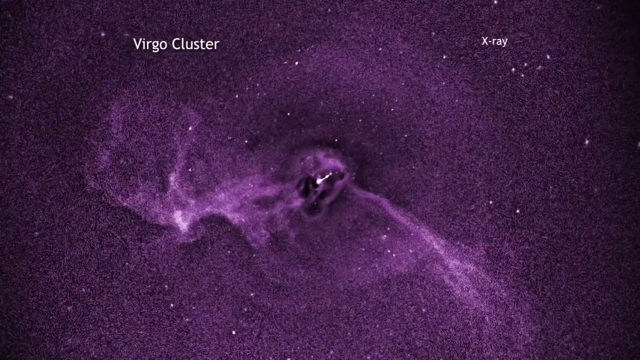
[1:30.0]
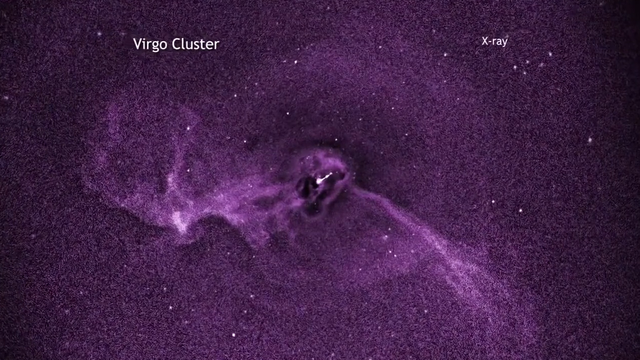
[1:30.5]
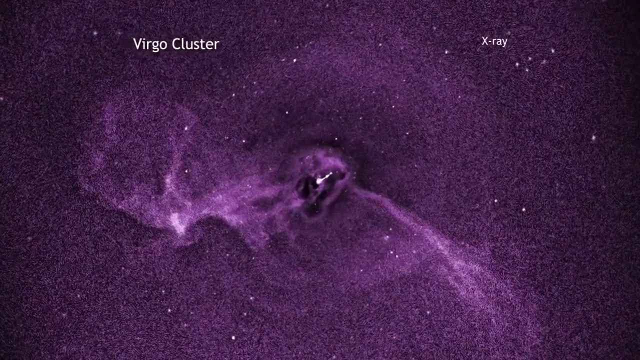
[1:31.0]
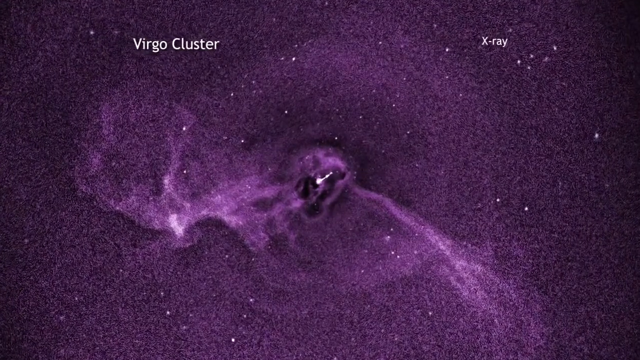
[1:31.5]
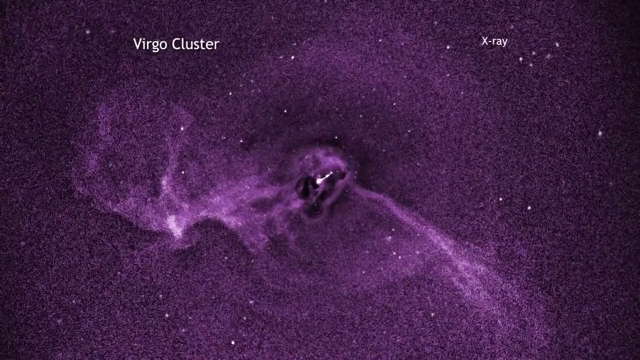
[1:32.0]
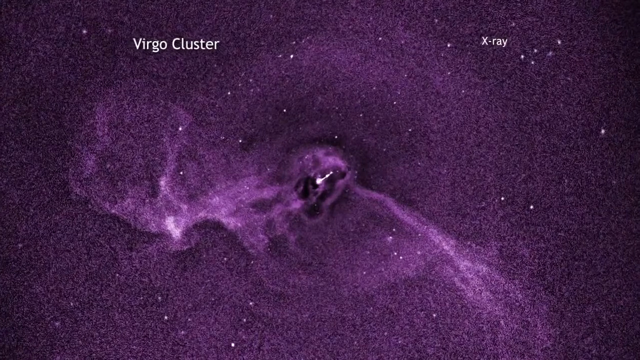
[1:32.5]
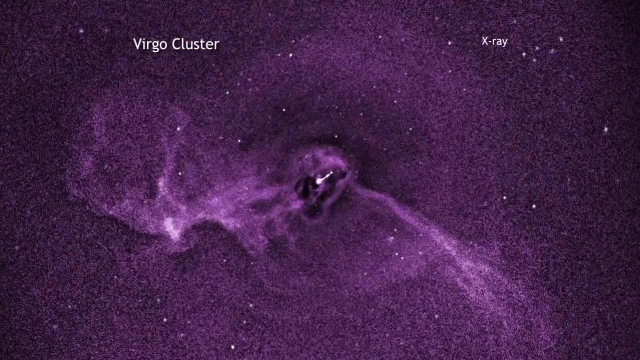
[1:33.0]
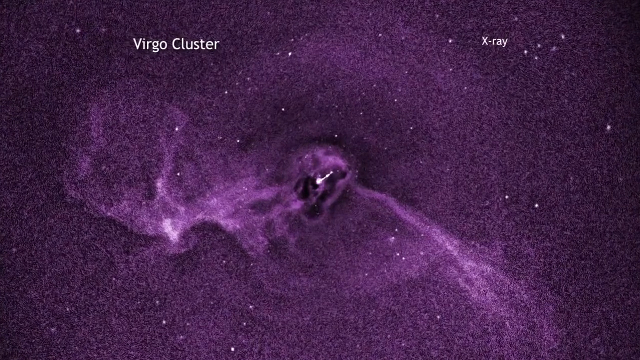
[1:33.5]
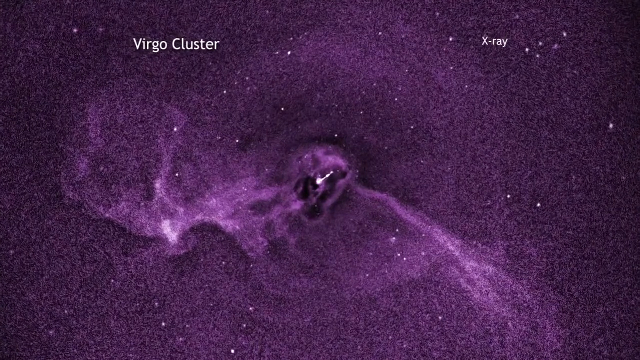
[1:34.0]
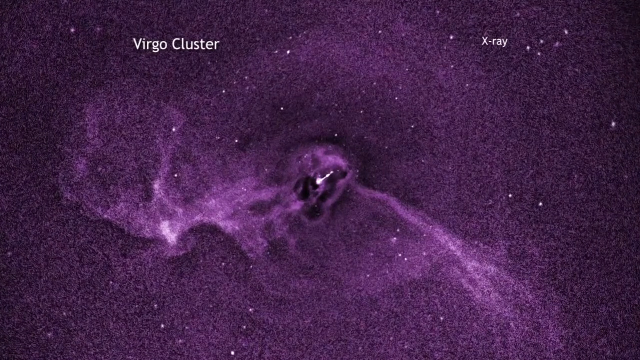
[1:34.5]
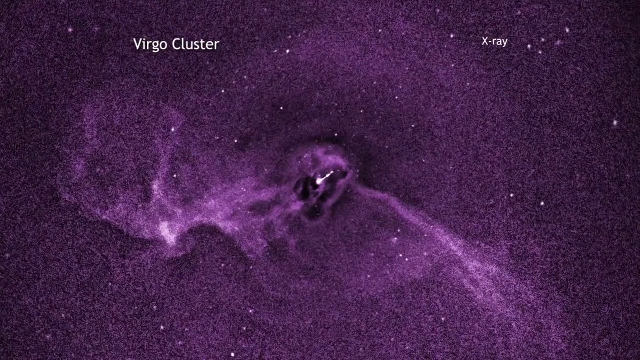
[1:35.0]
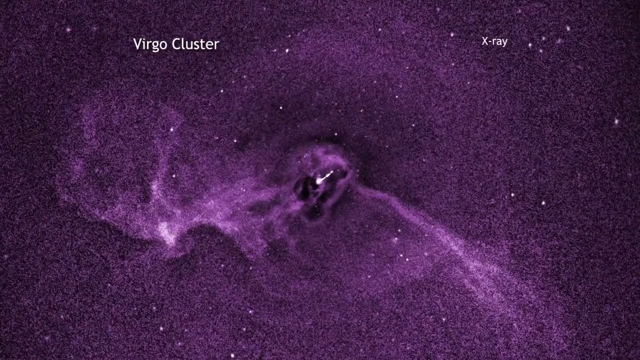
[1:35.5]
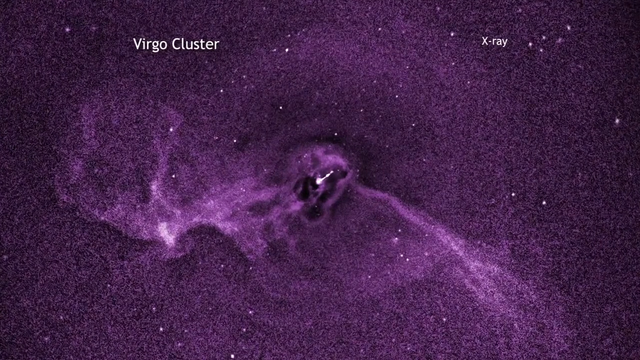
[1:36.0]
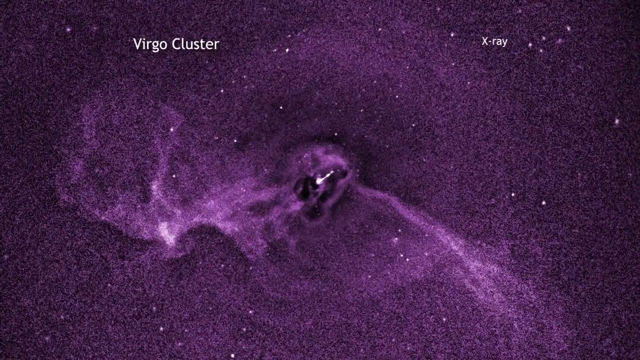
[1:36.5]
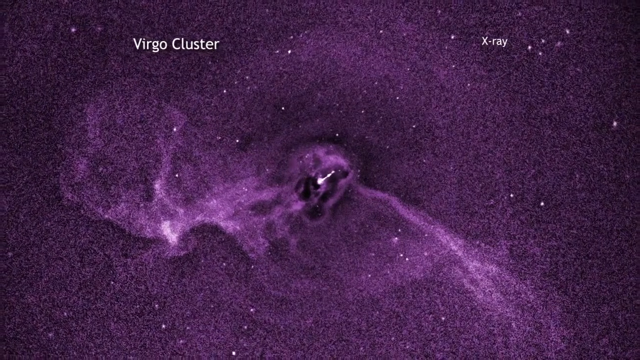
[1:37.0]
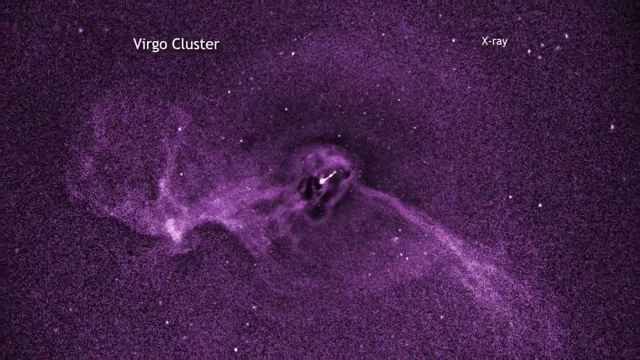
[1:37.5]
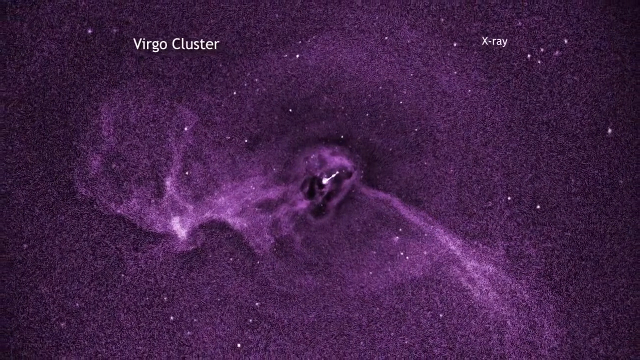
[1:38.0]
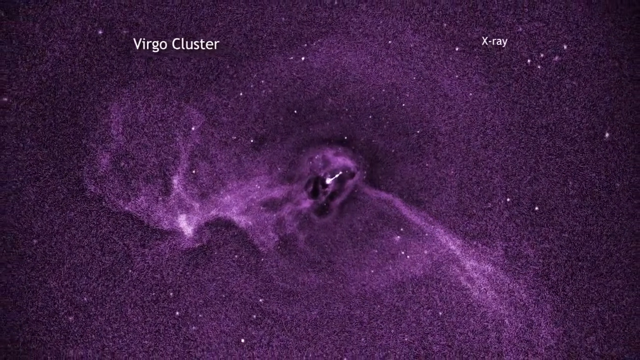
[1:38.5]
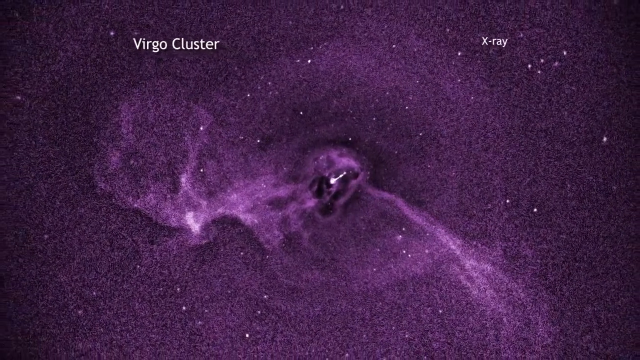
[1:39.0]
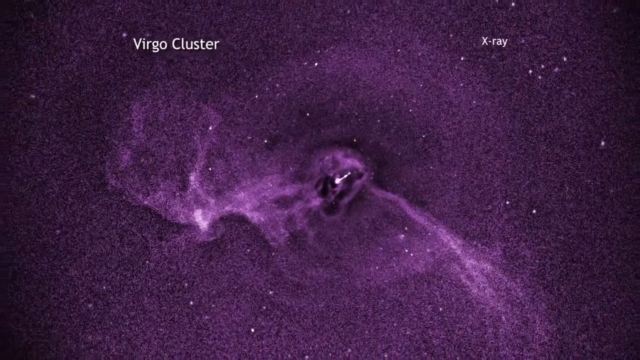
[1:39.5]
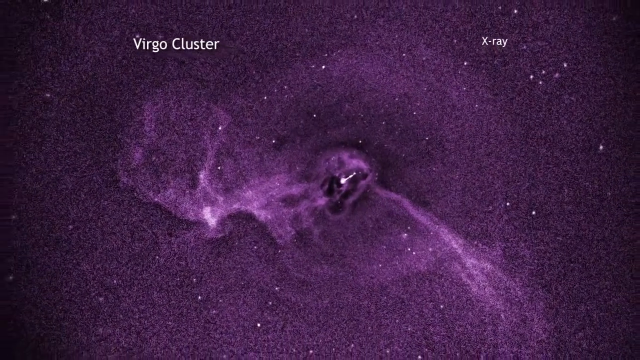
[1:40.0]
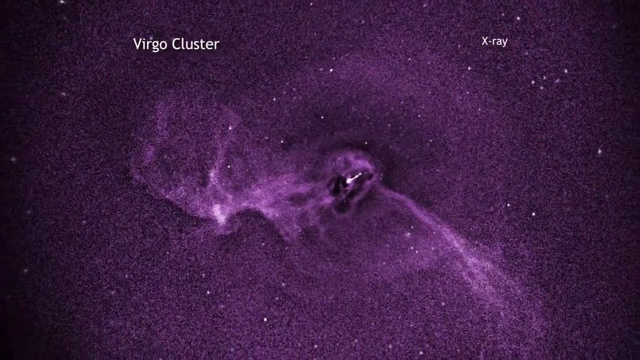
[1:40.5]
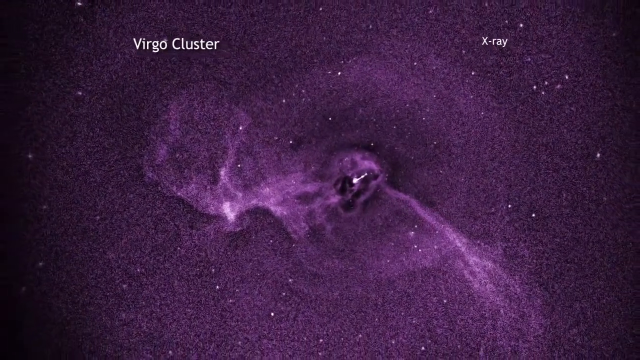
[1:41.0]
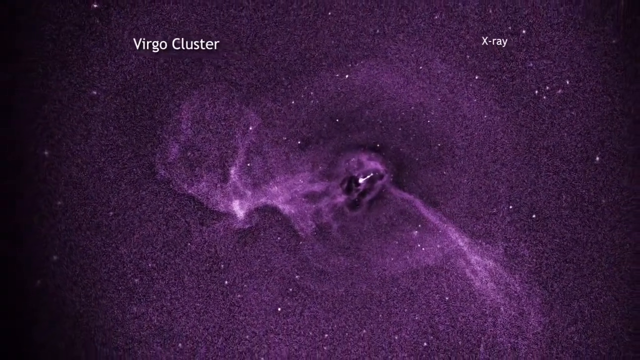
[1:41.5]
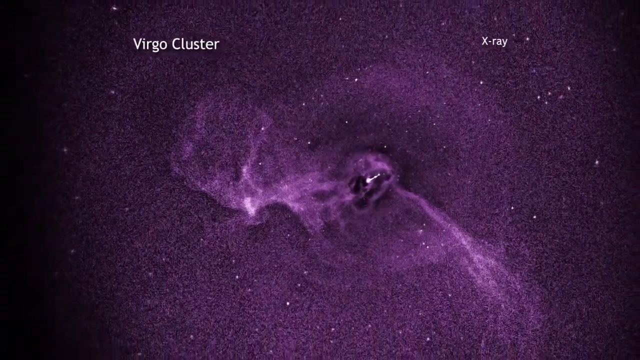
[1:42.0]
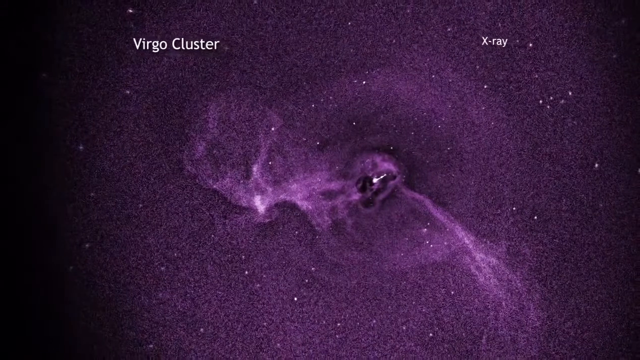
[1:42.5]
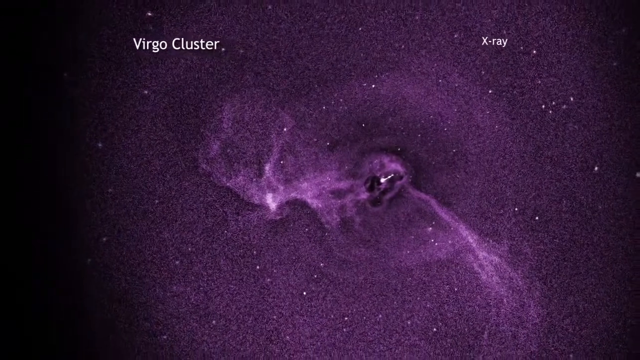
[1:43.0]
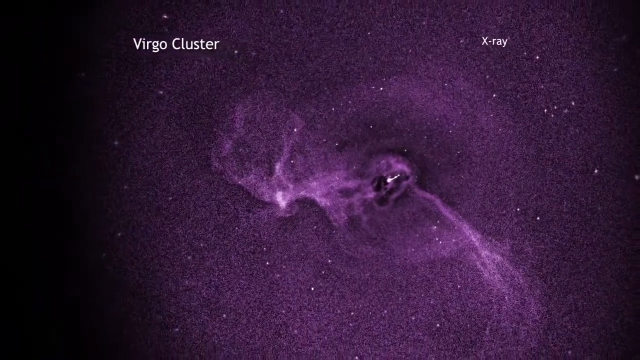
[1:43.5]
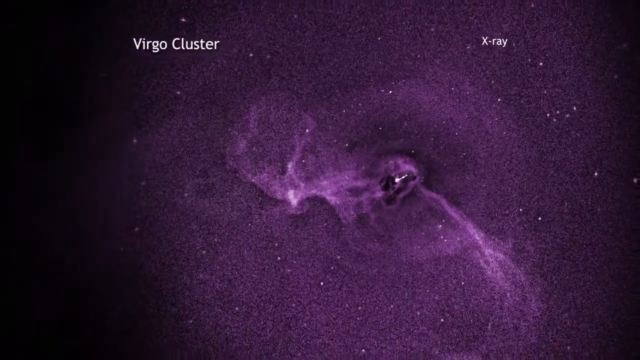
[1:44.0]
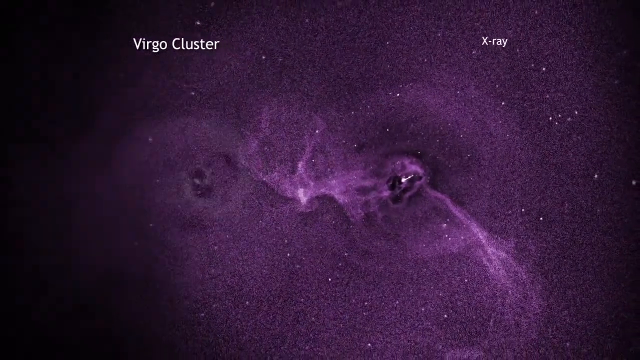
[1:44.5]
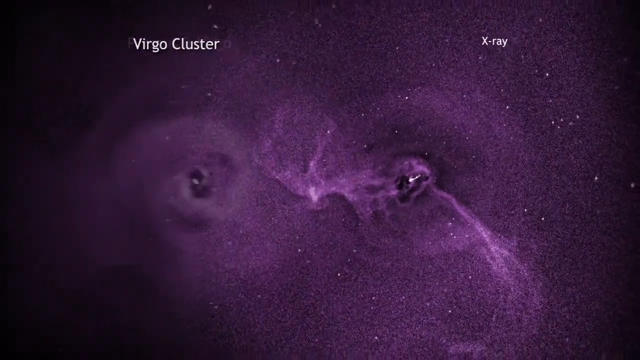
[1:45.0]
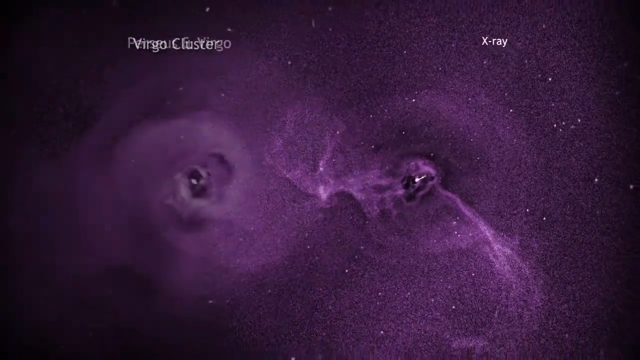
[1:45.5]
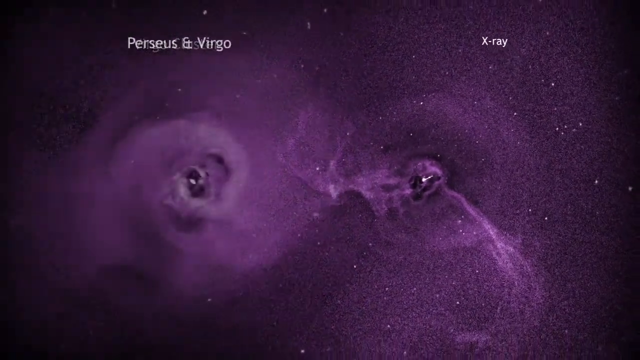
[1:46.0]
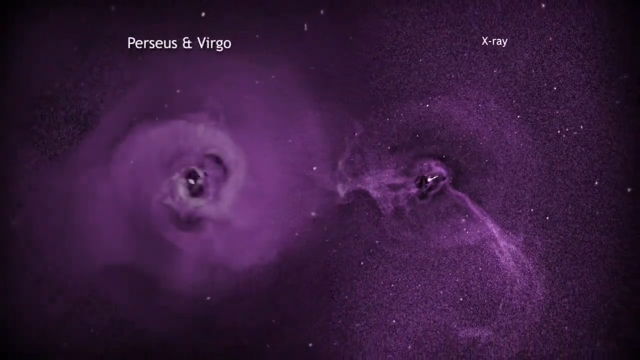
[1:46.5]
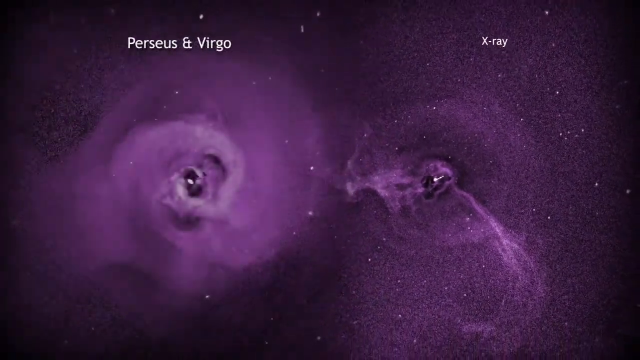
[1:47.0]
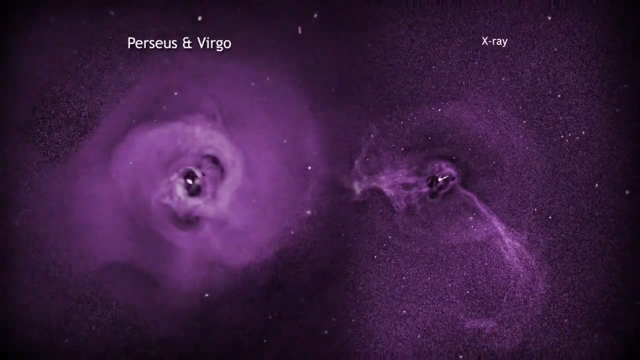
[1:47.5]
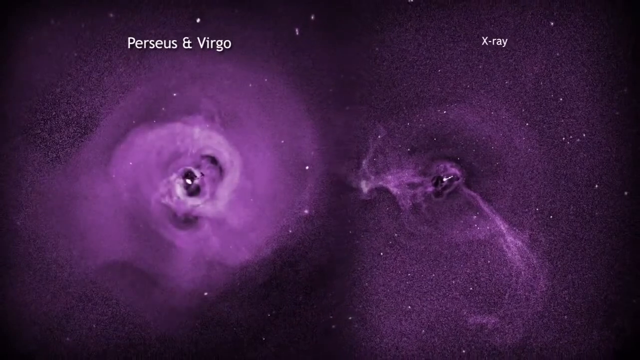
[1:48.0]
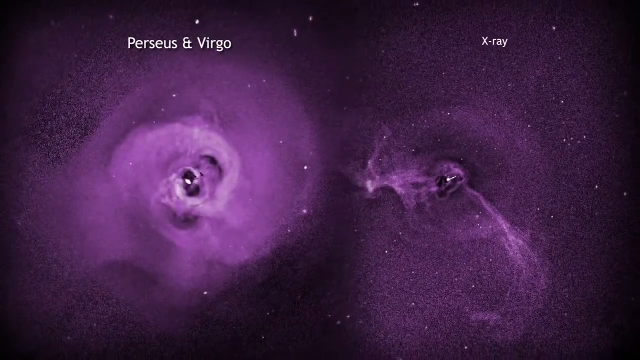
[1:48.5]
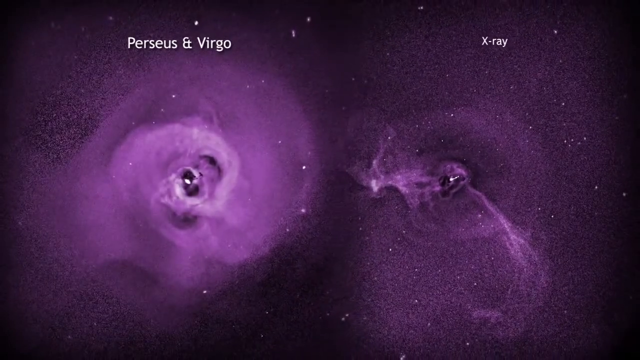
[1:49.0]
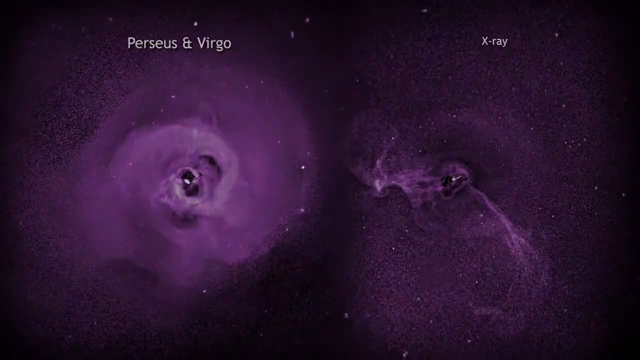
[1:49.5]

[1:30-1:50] Bright white parts of the Virgo cluster extend to the left and right of the main point. Inside the cluster is a bright white dot with a tail going to its right, and there are two dots at the end of the tail. Irregularly shaped white dots are scattered throughout the cluster's surroundings. The left side of the cluster goes left and then up, while the right side goes down. The structures almost resemble the way tree roots grow or veins look, with a thicker base and smaller lines shooting out from the main part. The video zooms into the cluster again and seems to rotate slightly as it does. The Virgo cluster then zooms out and the Perseus cluster is shown on the left. An image labeled "Perseus and Virgo" seems to show both of them overlapping each other.